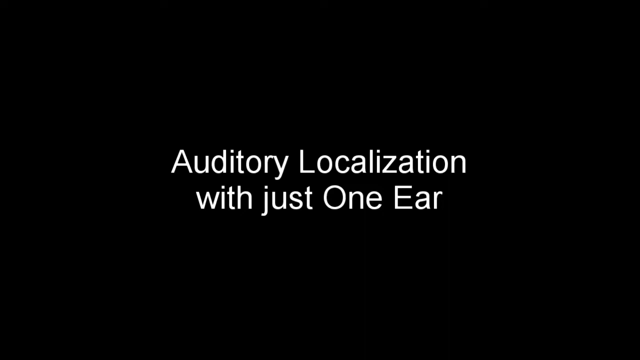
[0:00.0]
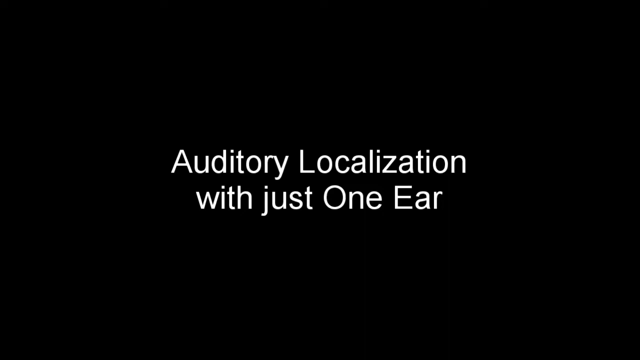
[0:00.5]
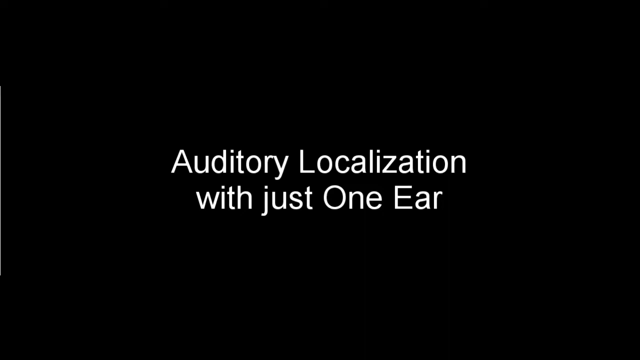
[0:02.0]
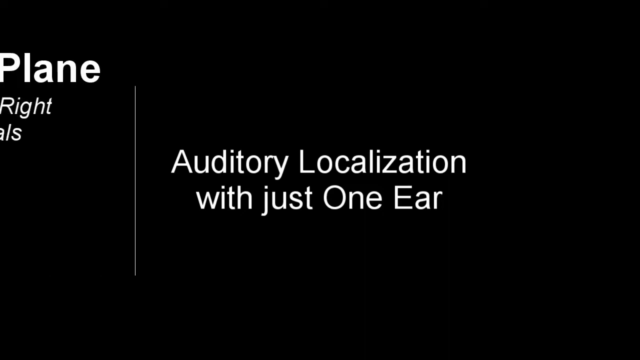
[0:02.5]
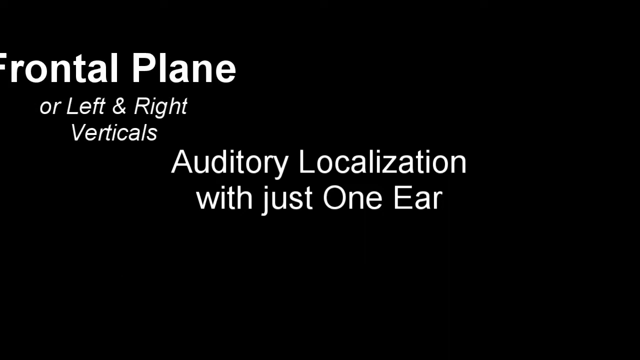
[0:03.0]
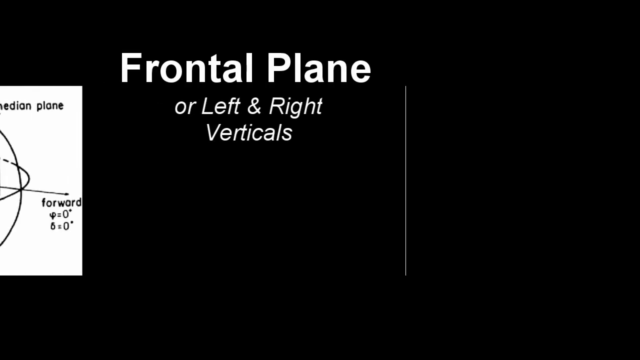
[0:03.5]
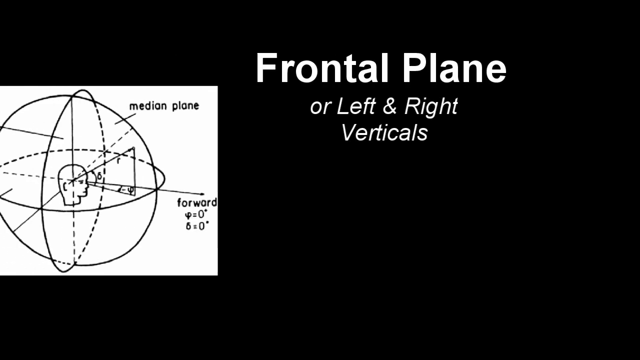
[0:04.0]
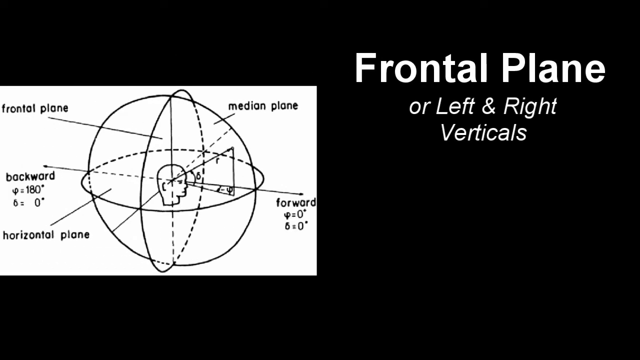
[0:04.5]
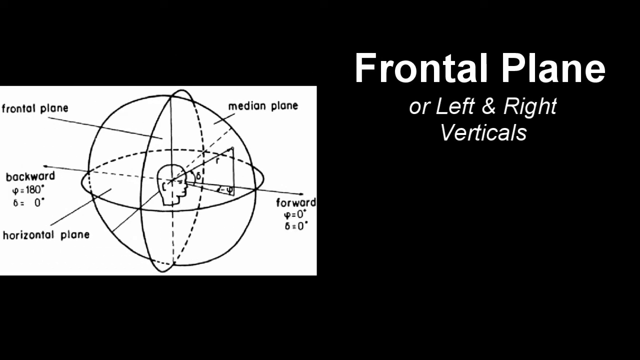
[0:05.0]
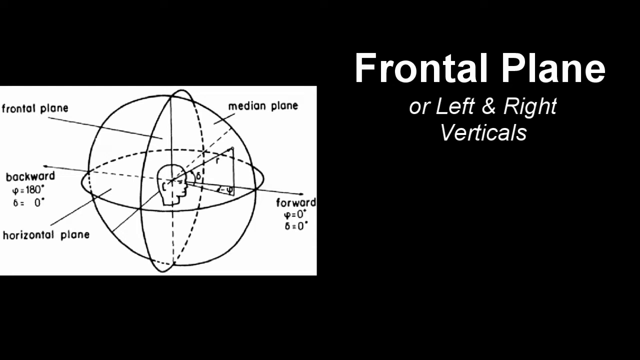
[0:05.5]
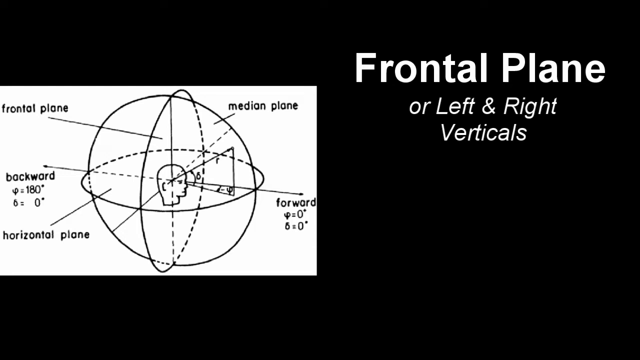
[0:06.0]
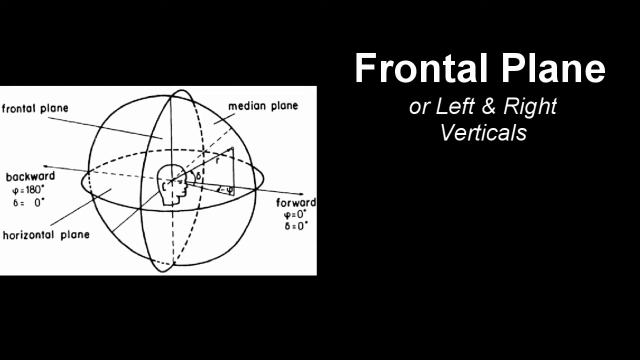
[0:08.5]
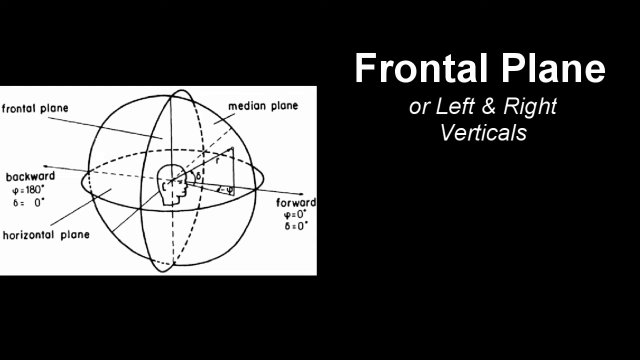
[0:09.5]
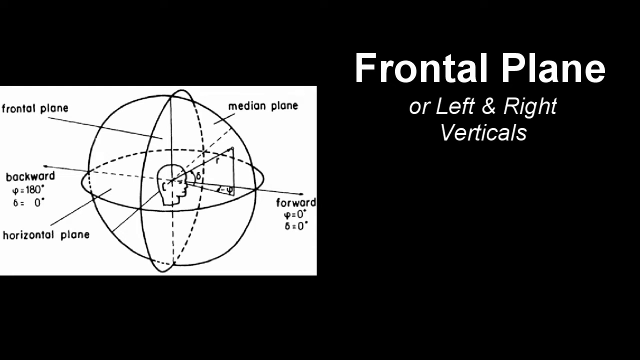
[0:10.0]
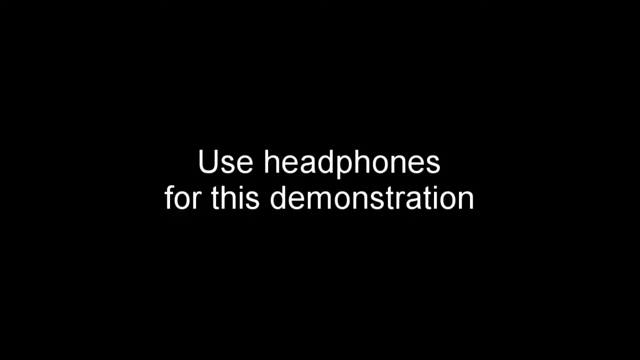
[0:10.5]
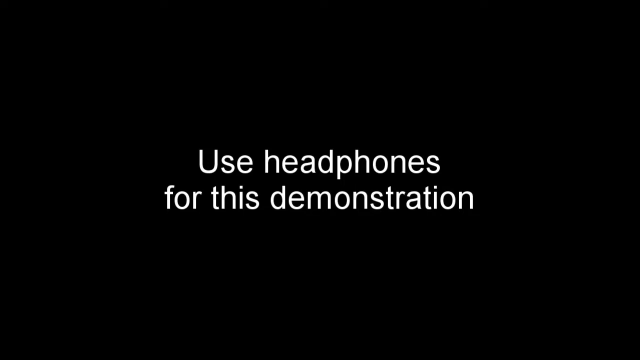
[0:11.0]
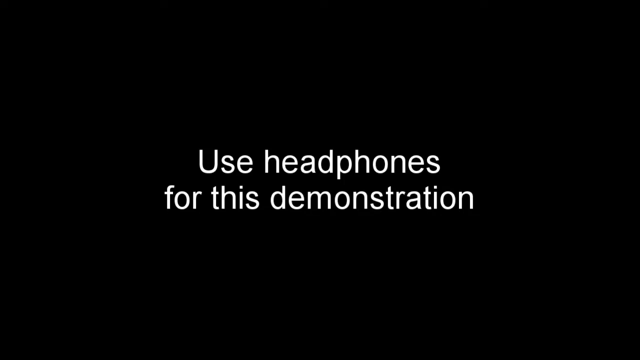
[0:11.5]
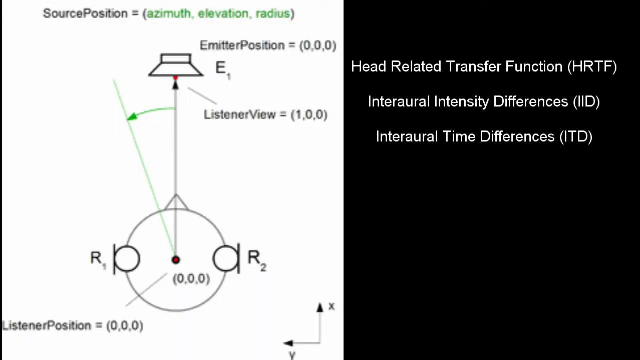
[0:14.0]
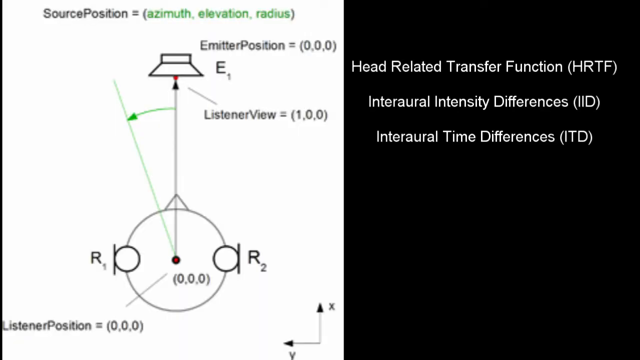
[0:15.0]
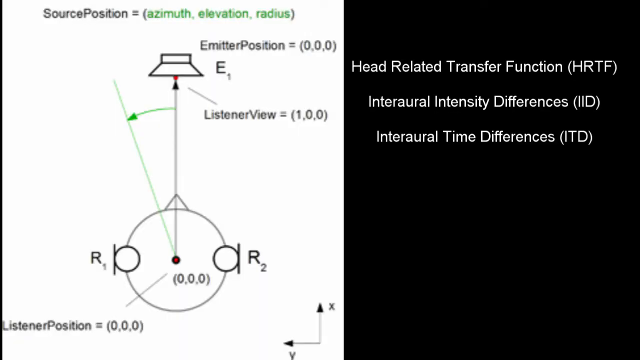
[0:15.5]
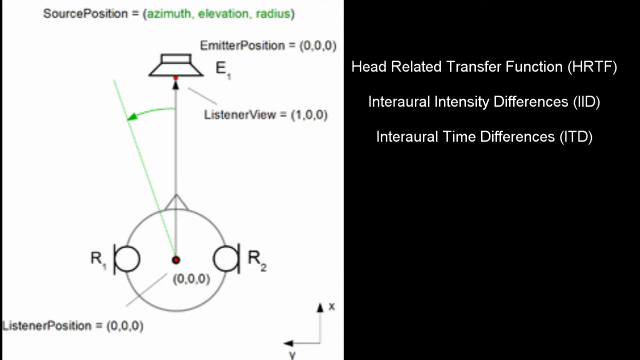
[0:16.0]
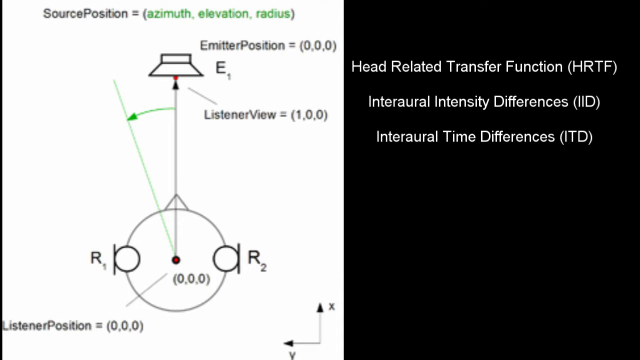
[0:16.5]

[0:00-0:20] A black background shows white bold text in the center reading "auditory localization with just one ear." Text then moves from the left to the right of the screen with a white line, reading "frontal plane or left and right verticals." A white graphic of a black circle appears, with dashed lines in a circle and a head in the center with a triangle. Labels read "frontal plane," "median plane," "backward," "P equals 180 degree," "P equals 0 degrees," "horizontal plane," "forward," "P equals 0 degrees," and "P equals 0 degrees." The video transitions to a black background with white text reading "use headphones for this demonstration." Another screen follows with a black box and white text reading "head-related transfer function, HRTF, interaural intensity differences, IID, interaural time differences, ITD." A white graphic with black and green text reads "source position equals azimuth elevation radius," "emitter position equals 0, 0, 0," "E1 listener view equals 1, 0, 0," and "listener position equals 0, 0, 0." A circle with a black line connects to something else, along with the letters P and D, the letters R1 and R2, and small black and red circles that connect.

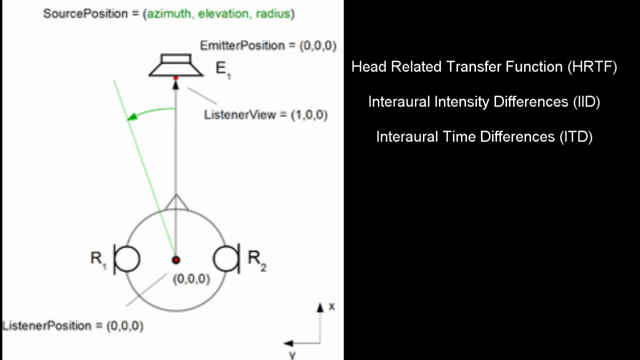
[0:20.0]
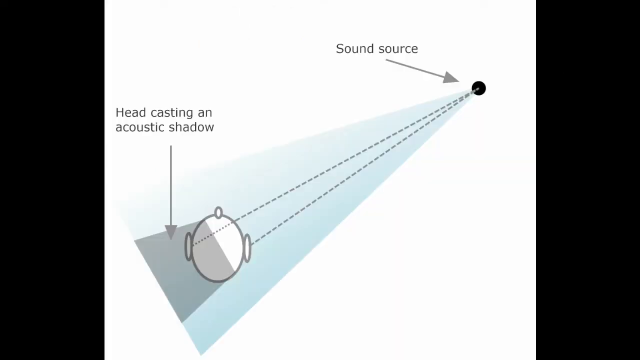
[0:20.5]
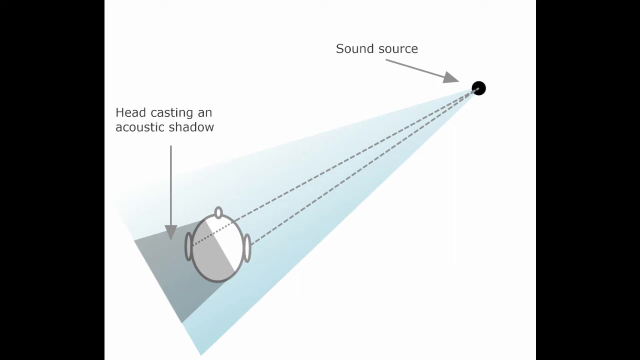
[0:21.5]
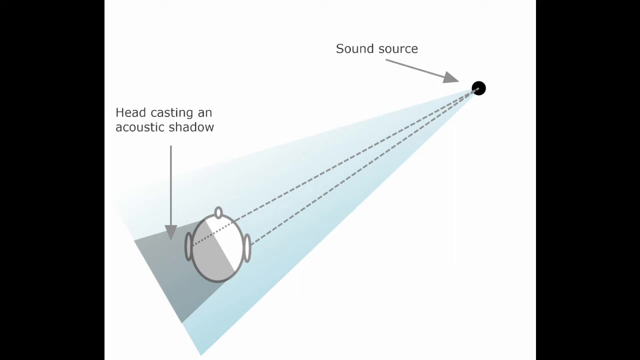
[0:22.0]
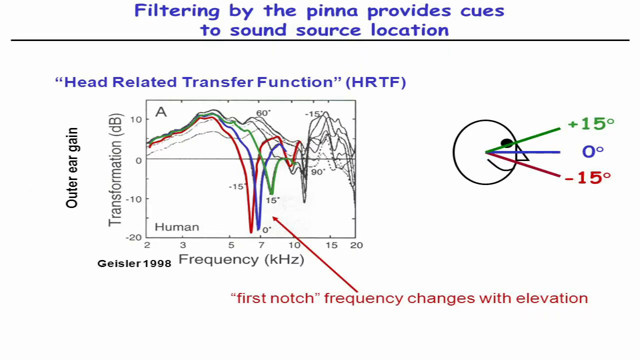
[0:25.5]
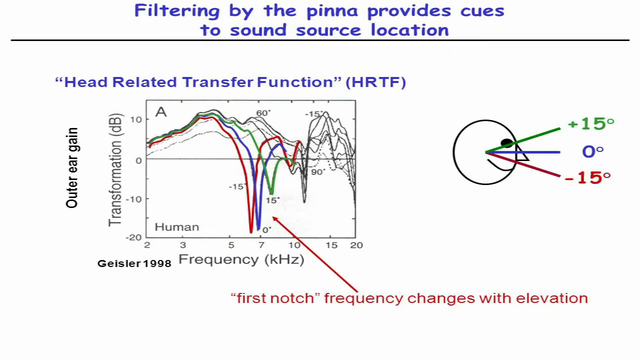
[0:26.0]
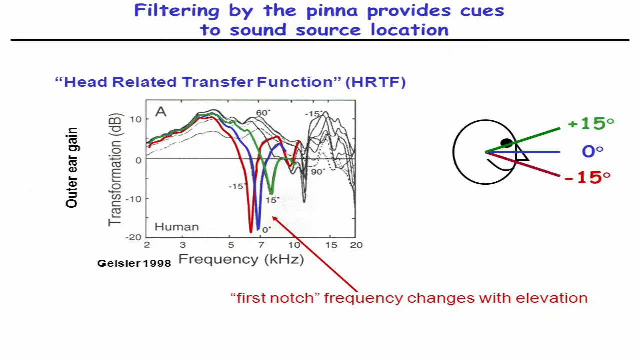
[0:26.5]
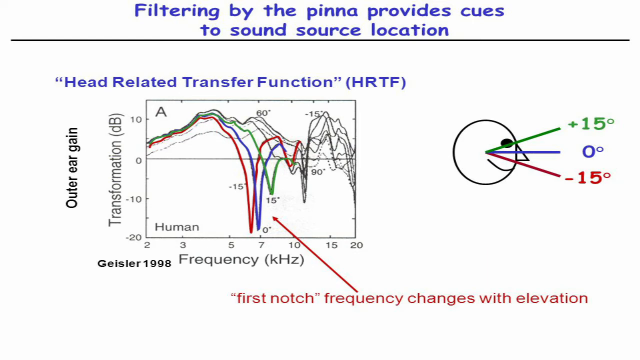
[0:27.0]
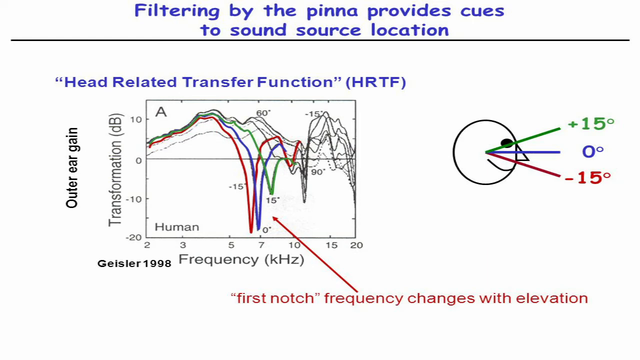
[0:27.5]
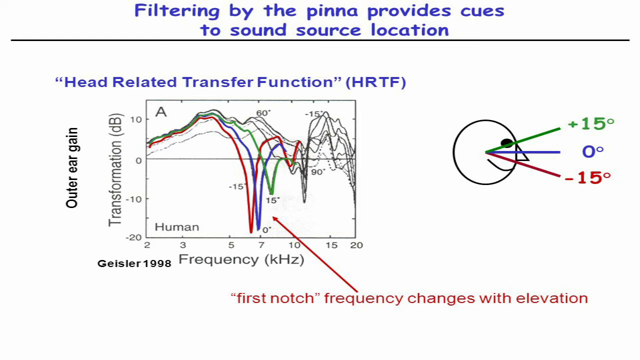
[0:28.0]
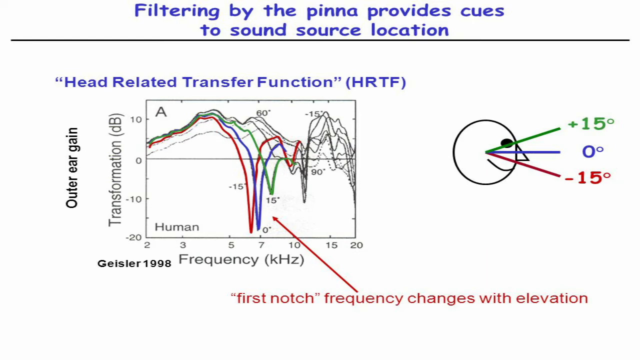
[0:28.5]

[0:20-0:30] A black screen on the right shows white text reading "head-related transfer function HRTF, interaural intensity differences IID, interaural time differences ITD," while a white screen on the left shows black and green text reading "source position equals azimuth elevation radius, emitter position equals 0, 0, 0, E1, listener view equals 1, 0, 0, listener position equals 0, 0, 0." There is a circle with a black line and some green lines, with additional text reading "R1, P, D, R2, 0, 0, 0." The video then moves to a white screen with black text reading "headcasting and acoustic shadow and sound source." Gray arrows point to areas with a blue triangular shape, and there is a rectangle and some circles with dashed lines connecting to the sound source. Next, a white background shows blue, black and red text reading "filtering by the pinna provides cues to sound source location, head-related transfer function HRTF." A graph has text next to it reading "outer ear gain transformation DB, Geisler 1998, frequency KHZ," and red text pointing to the graph reads "first notch frequency changes with elevation." A black circle with green, blue and red lines is labeled "plus 15 degrees," "zero degrees," and "minus 15 degrees."